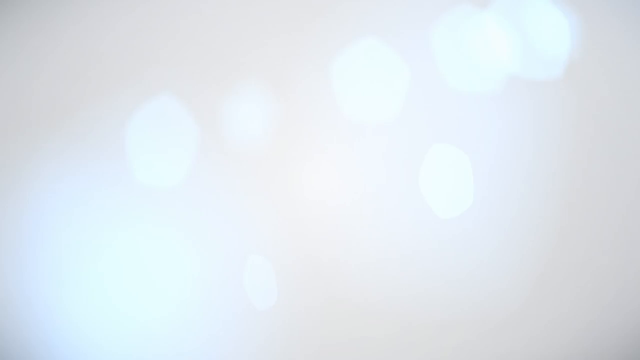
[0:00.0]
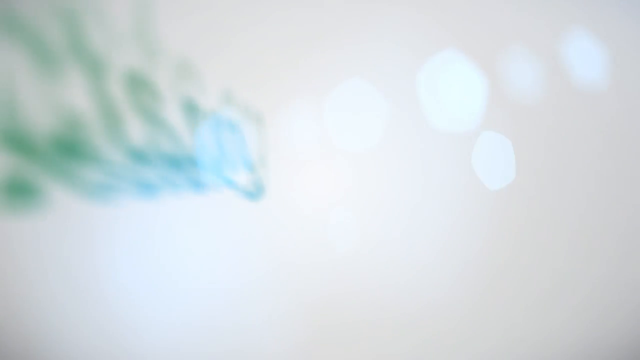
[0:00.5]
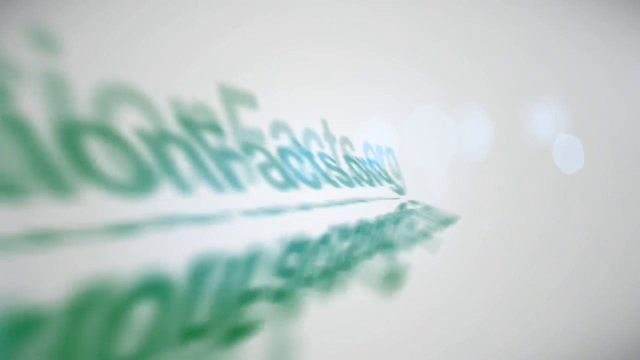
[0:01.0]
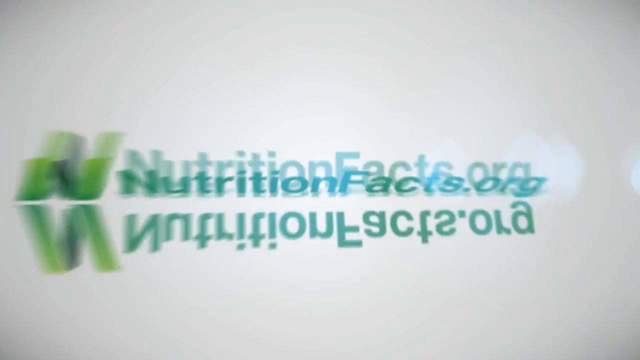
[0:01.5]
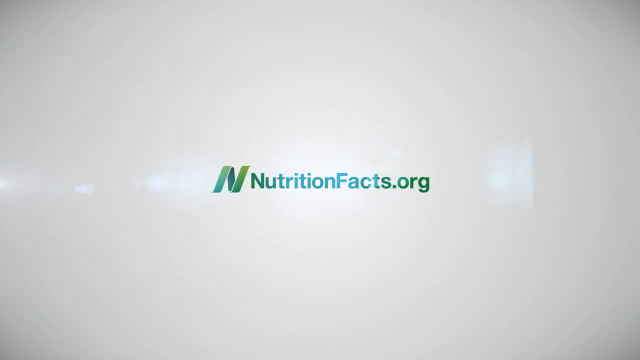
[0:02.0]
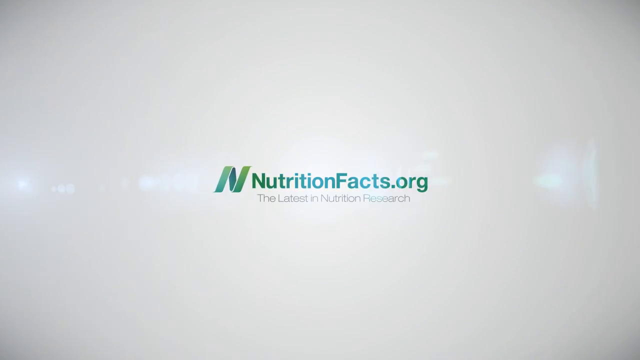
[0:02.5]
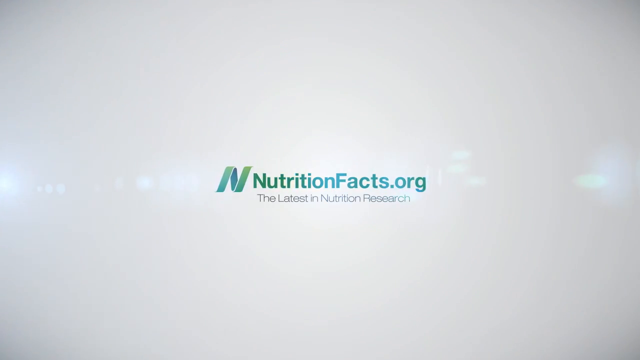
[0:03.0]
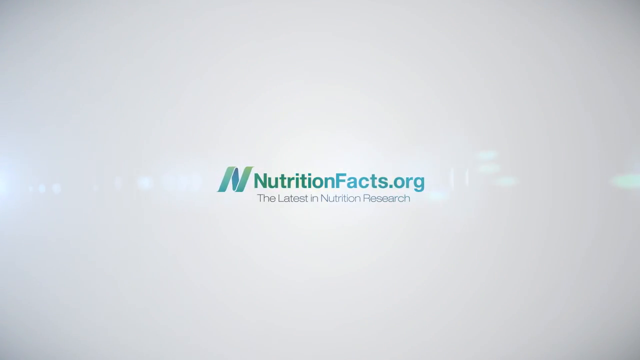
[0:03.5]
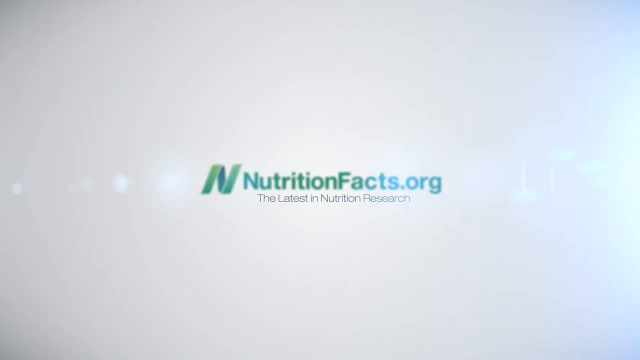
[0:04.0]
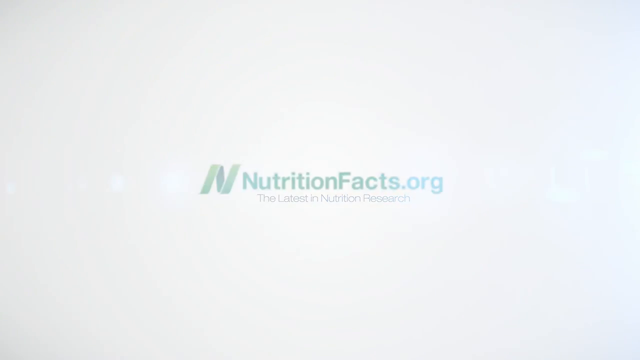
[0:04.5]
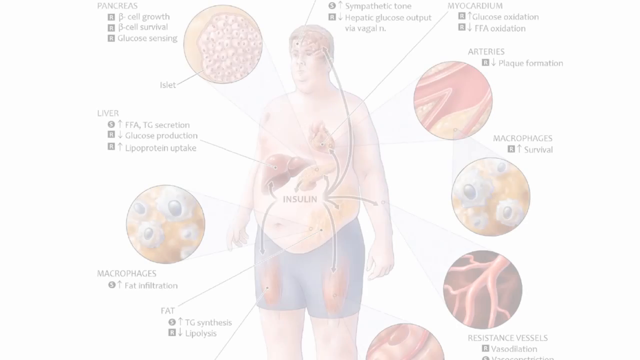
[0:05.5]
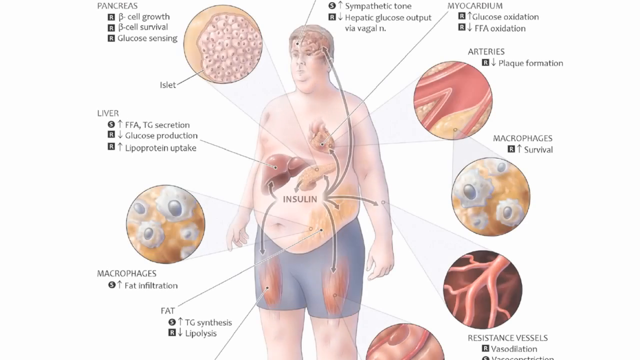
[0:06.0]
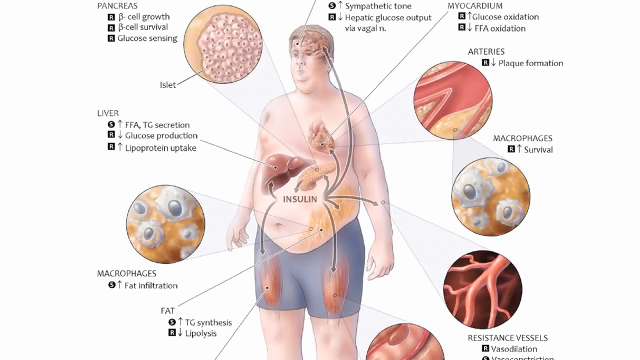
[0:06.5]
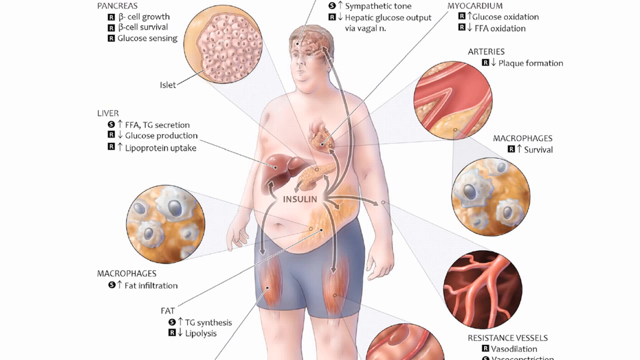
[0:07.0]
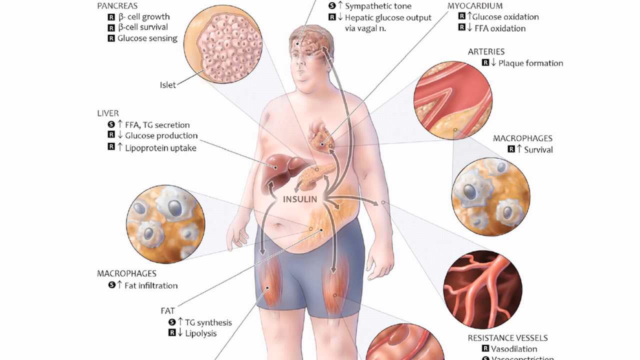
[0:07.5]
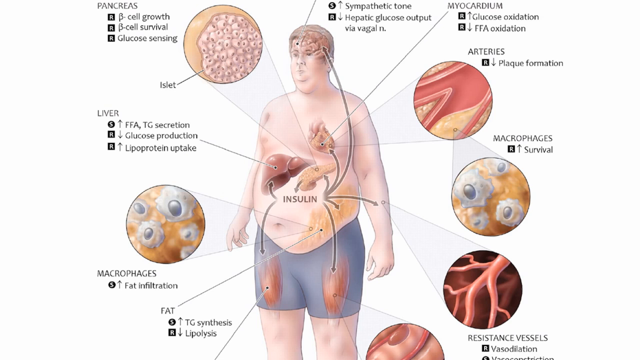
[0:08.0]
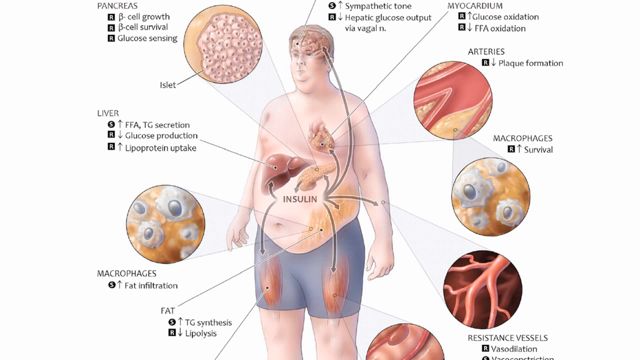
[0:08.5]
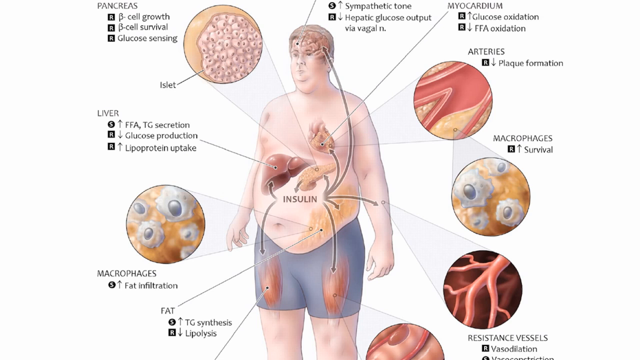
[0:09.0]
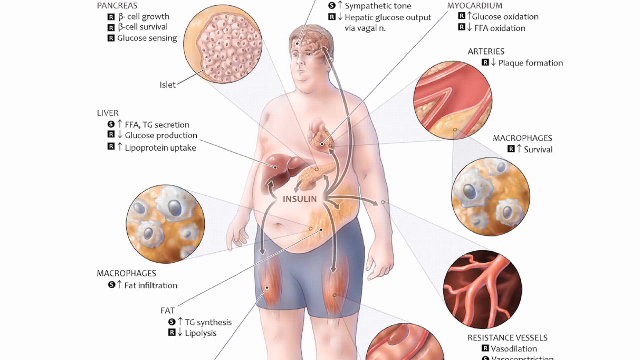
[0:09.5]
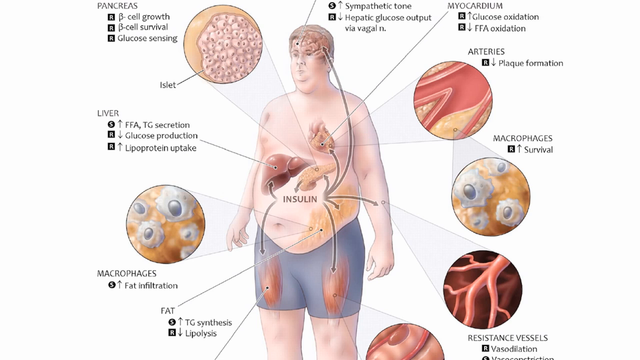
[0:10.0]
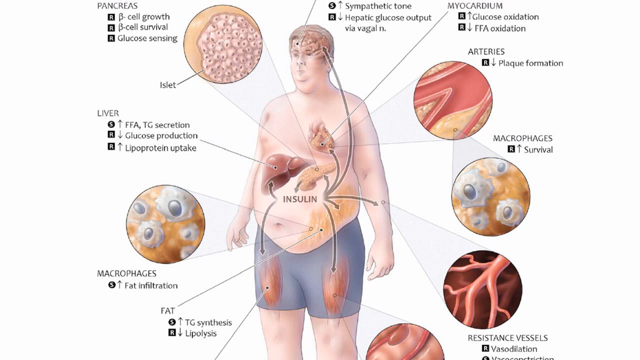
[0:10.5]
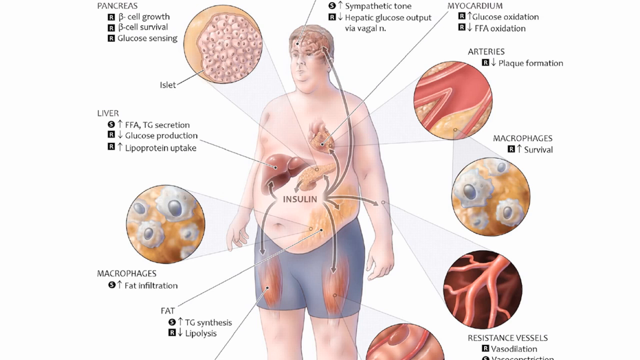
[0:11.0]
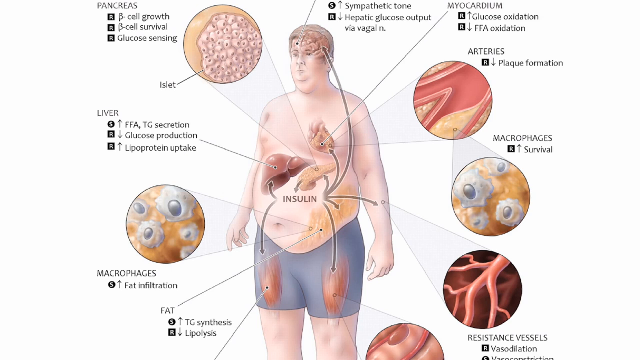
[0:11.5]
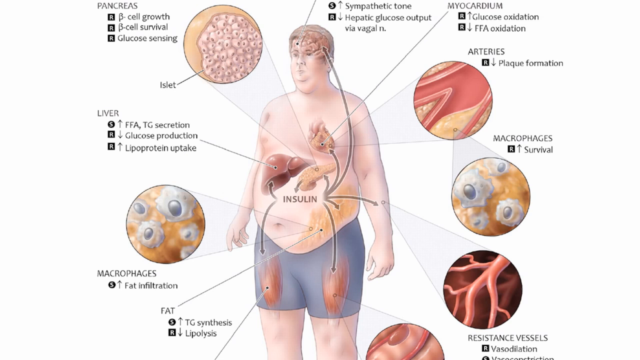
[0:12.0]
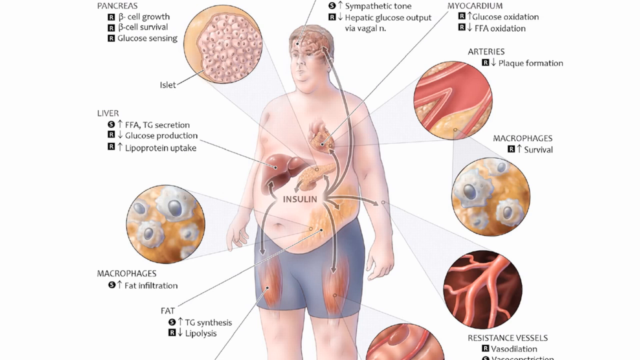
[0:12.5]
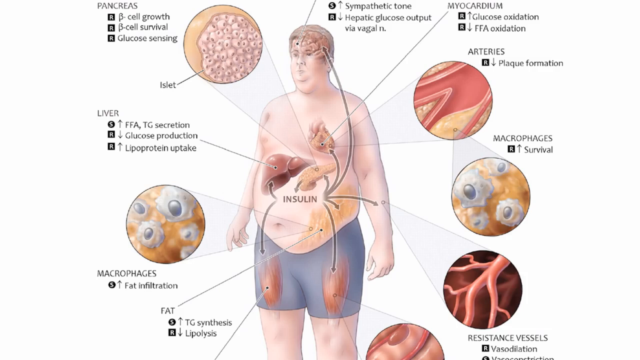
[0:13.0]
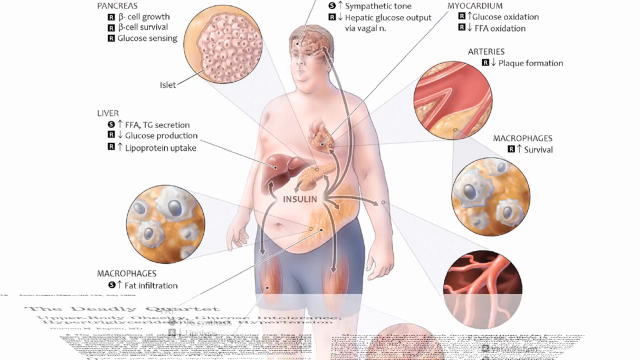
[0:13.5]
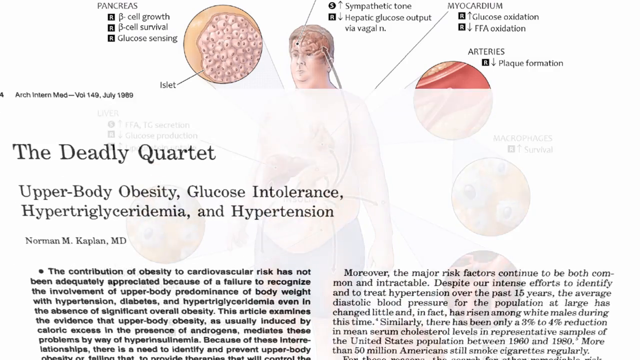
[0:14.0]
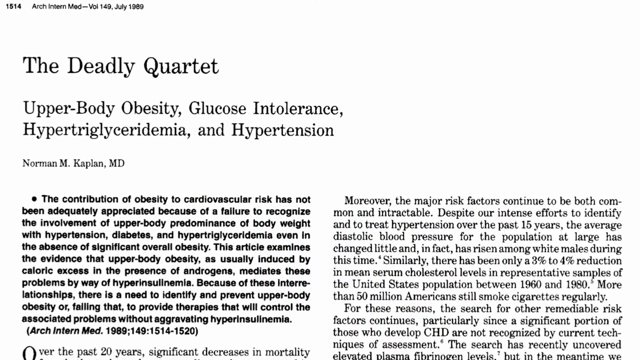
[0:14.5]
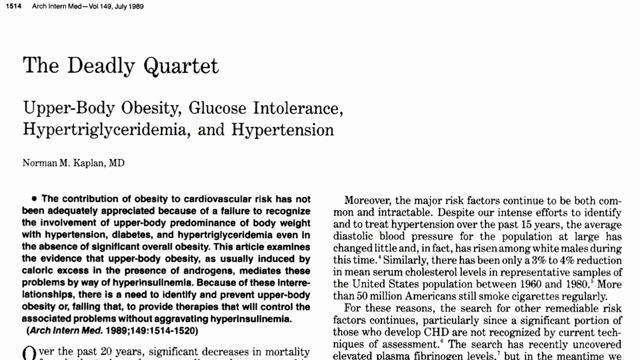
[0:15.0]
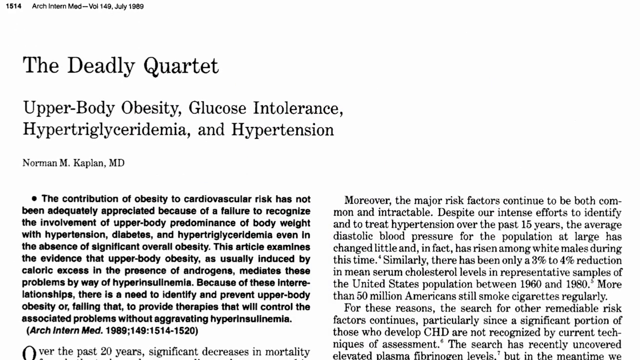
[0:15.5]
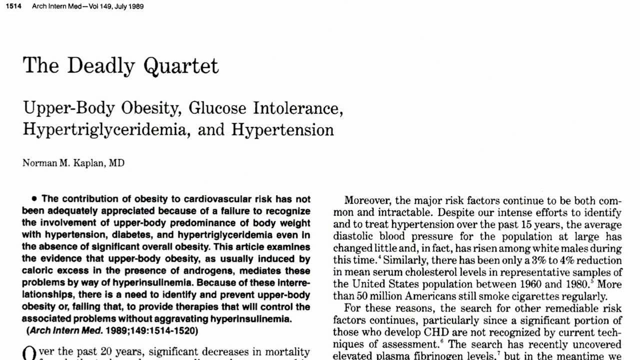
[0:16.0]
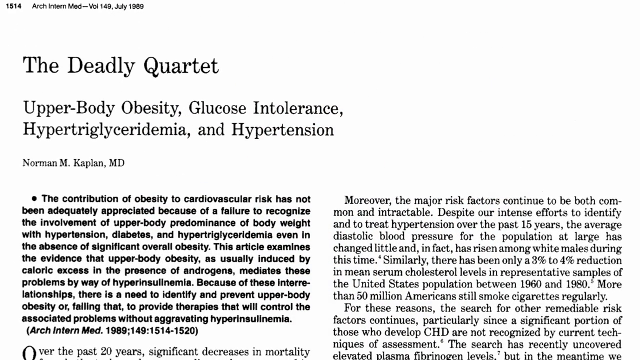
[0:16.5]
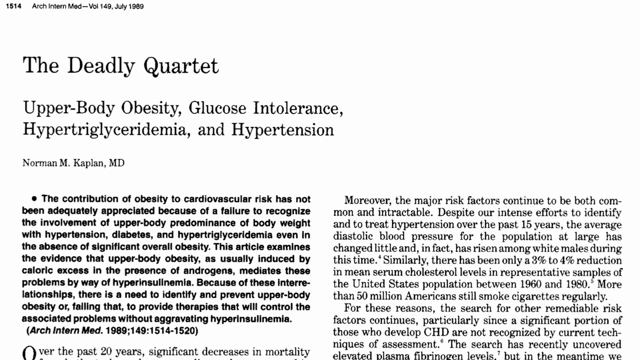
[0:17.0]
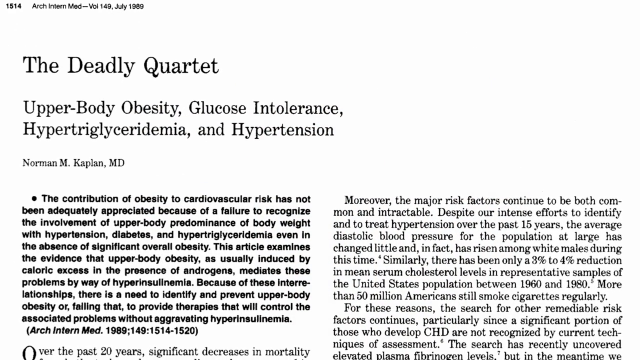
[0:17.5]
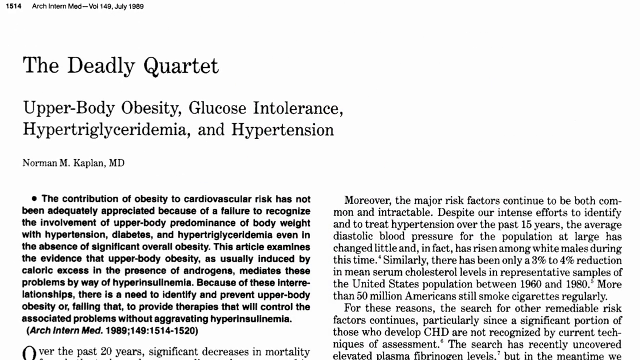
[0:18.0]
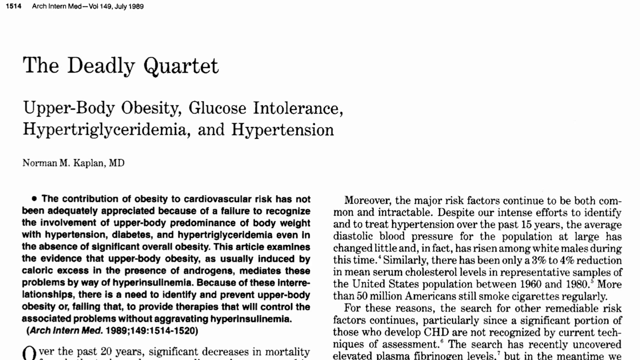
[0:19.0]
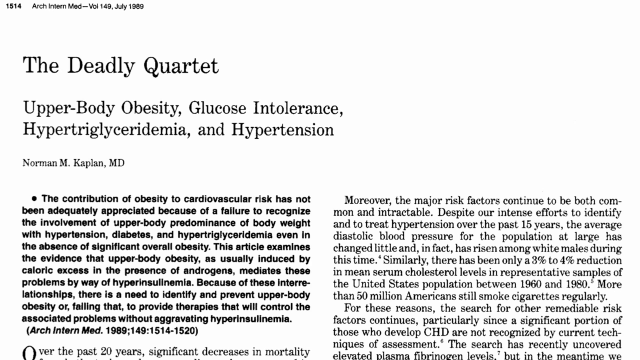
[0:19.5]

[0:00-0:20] The video opens in a slideshow presentation format, with a cinematic backdrop of glowing bokeh, or blurred bright lights. Suddenly text moves in, flips around from top to bottom and spins into the center of the screen; as it lands, soft-focus flashes of light move out in a line toward the left and right edges. The text reads "NutritionFacts.org" in colors that shift from green to aqua blue. To the left of the word nutrition is an N in the same colors, made of what looks like a ribbon. Beneath this title, in thin dark gray text, is "the latest in nutrition research." A bright white color envelops the text until the screen is completely white, then fades into a diagram that looks like it comes from an anatomy book: an illustration in pastel colors with text labels. In the center stands an overweight man facing left, naked from the waist up, with a large belly and a double chin; the diagram clearly portrays him as overweight. Circles with microscopic illustrations of different parts of his body surround the figure, two to the left and three to the right, each showing a close-up of arteries and what look like cells. Seven sections of text with additional labeling underneath surround the man and the circles, titled "Macrophages," "Liver," "Pancreas," "Myocardium," "Arteries" and "Macrophages," in clockwise order from the bottom left around to the center right. In the center of the man's body, above his belly button, are three organs, and beneath them, in black capital letters, is "INSULIN." The slideshow stays on this slide for several seconds. The page then changes, shifting from bottom to top, to a newspaper article labeled "The Deadly Quartet, Upper-Body Obesity, Glucose Intolerance, Hypertriglyceridemia and Hypertension," written by Norman M. Kaplan, MD. Beneath are two columns of black text in newspaper style, and the first paragraph of the left column is highlighted in bold.